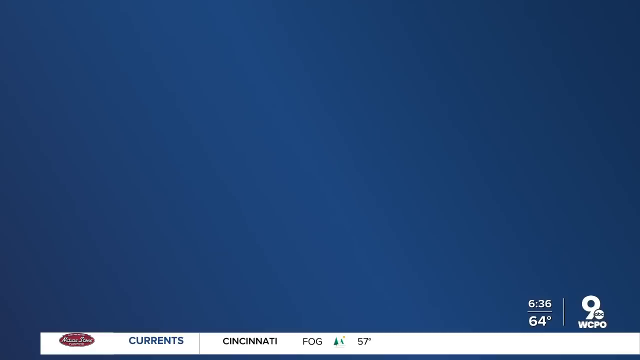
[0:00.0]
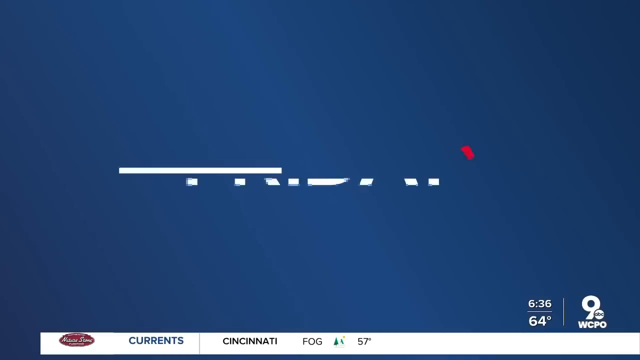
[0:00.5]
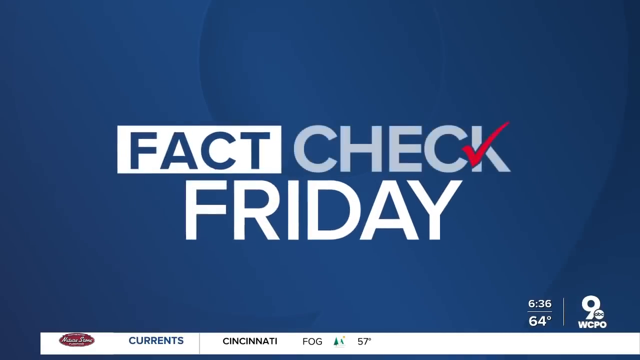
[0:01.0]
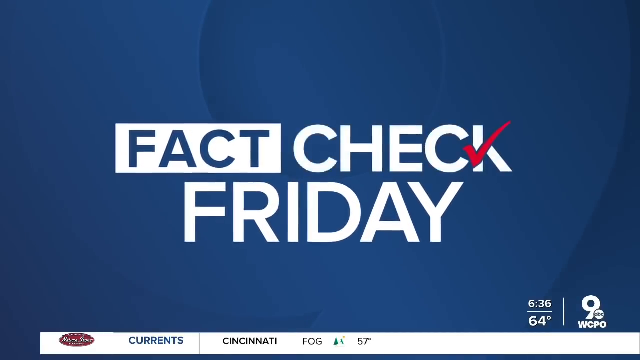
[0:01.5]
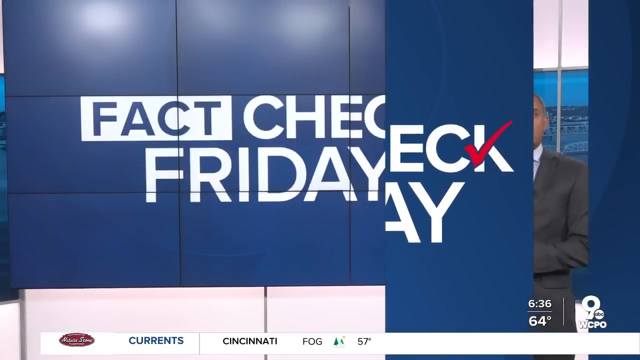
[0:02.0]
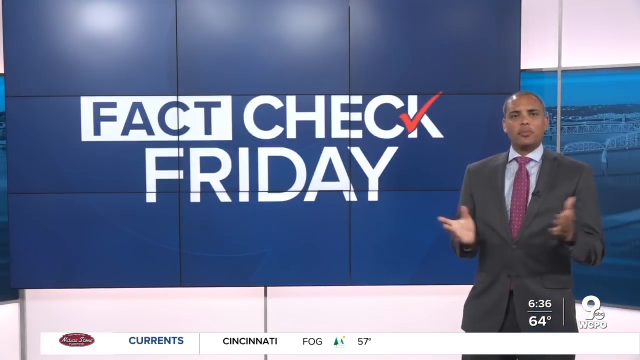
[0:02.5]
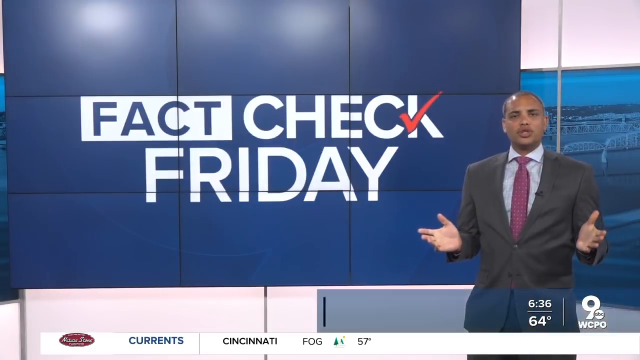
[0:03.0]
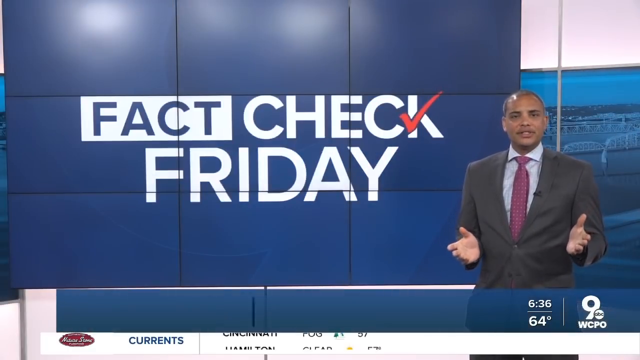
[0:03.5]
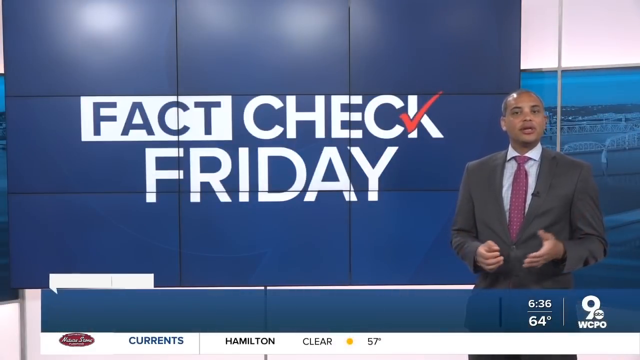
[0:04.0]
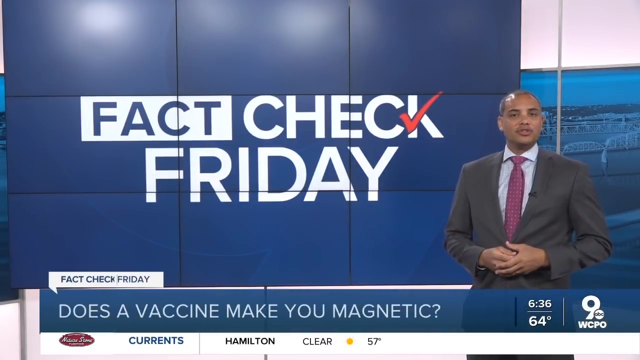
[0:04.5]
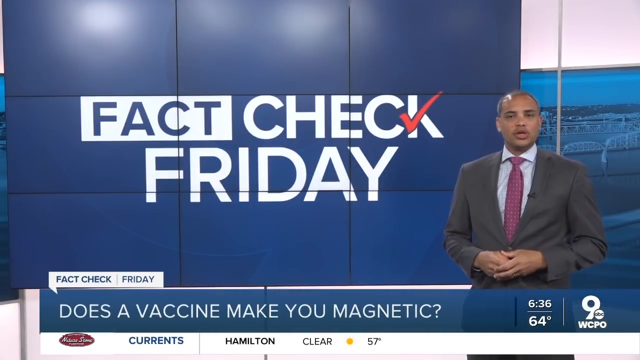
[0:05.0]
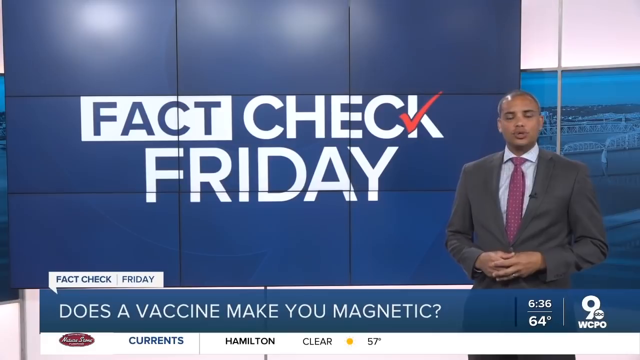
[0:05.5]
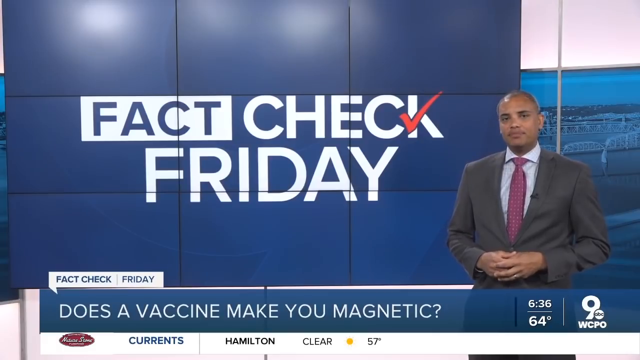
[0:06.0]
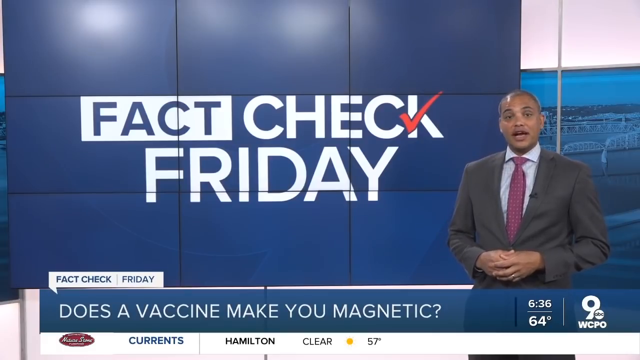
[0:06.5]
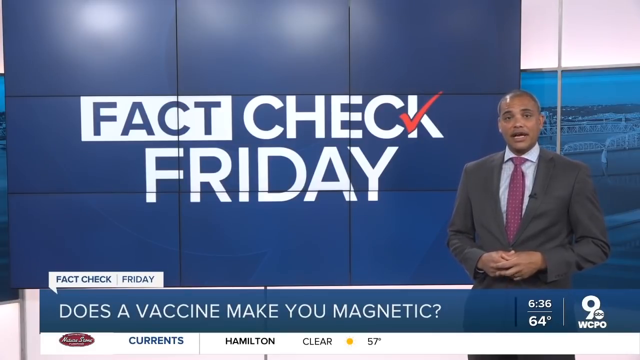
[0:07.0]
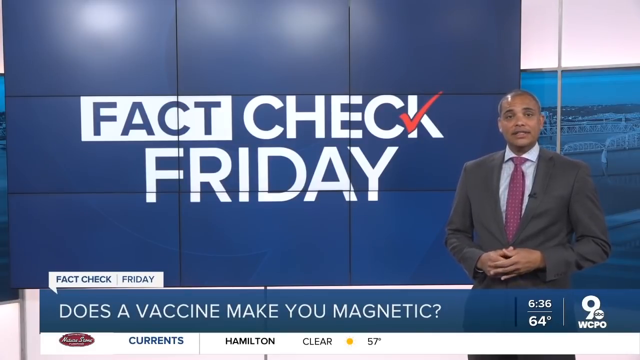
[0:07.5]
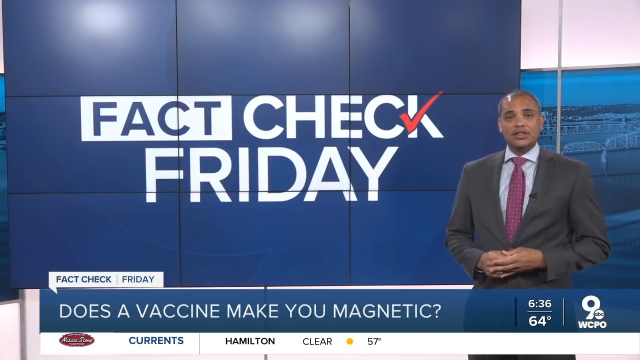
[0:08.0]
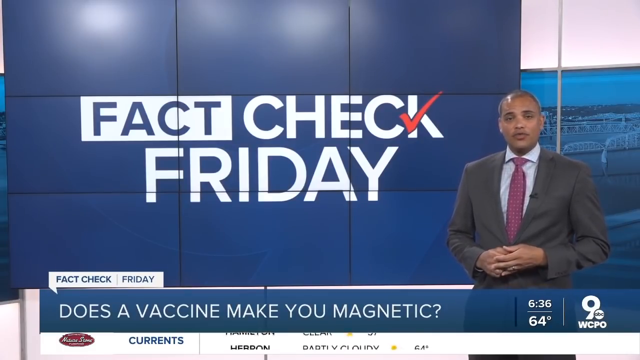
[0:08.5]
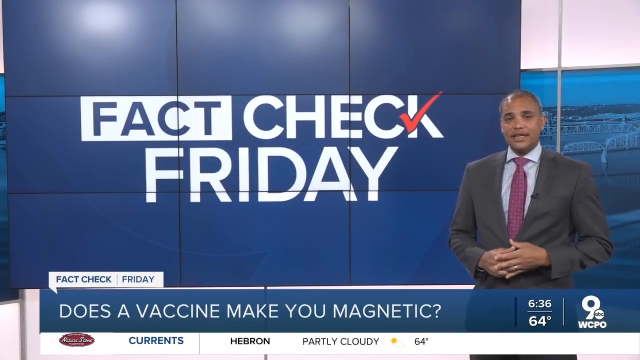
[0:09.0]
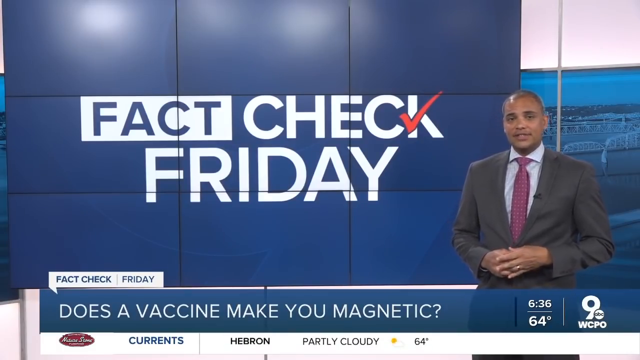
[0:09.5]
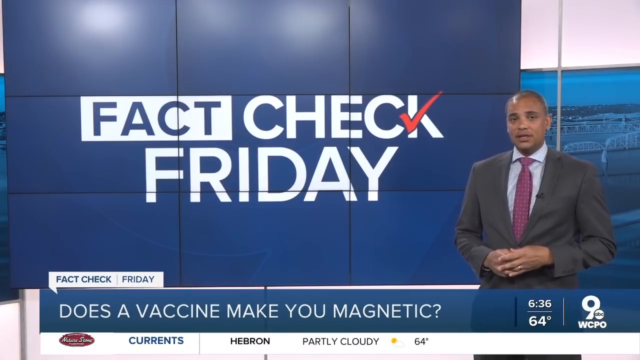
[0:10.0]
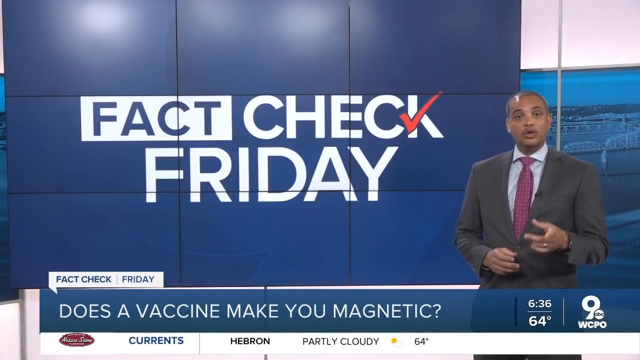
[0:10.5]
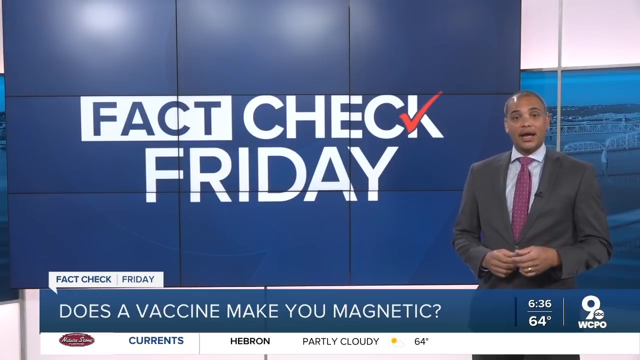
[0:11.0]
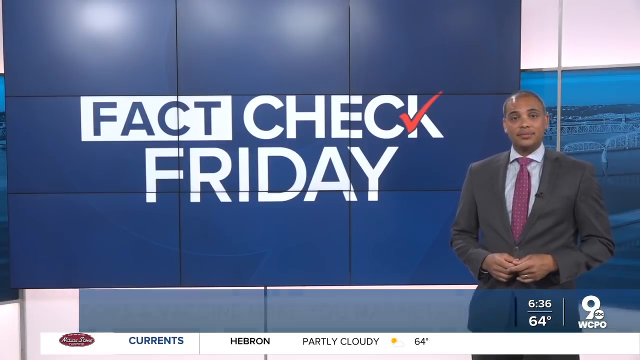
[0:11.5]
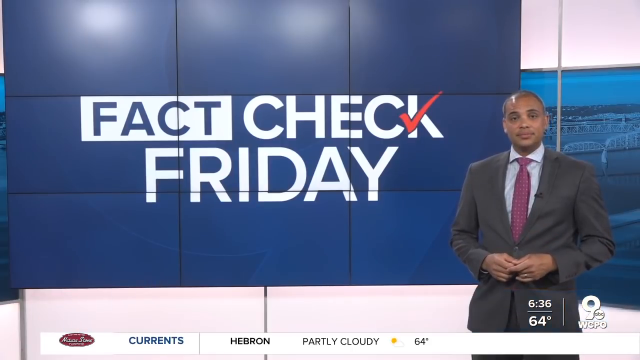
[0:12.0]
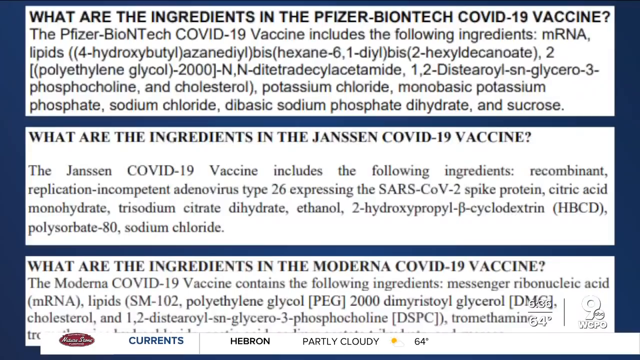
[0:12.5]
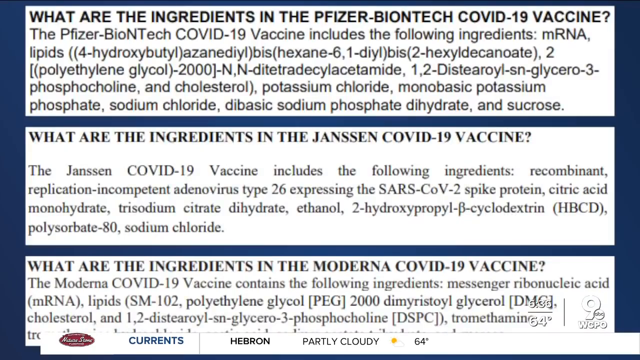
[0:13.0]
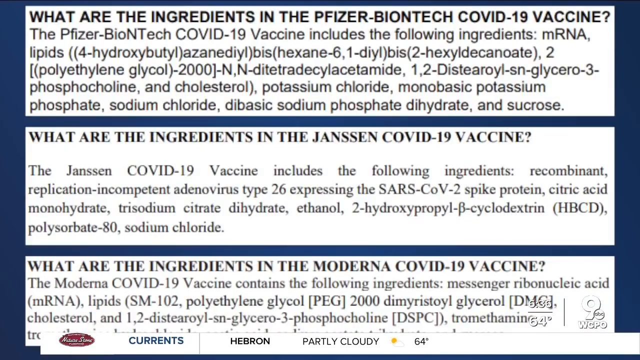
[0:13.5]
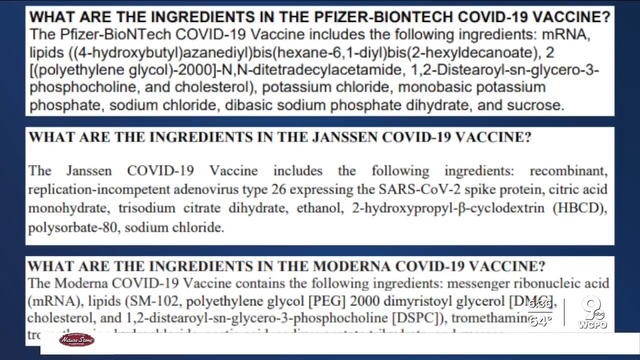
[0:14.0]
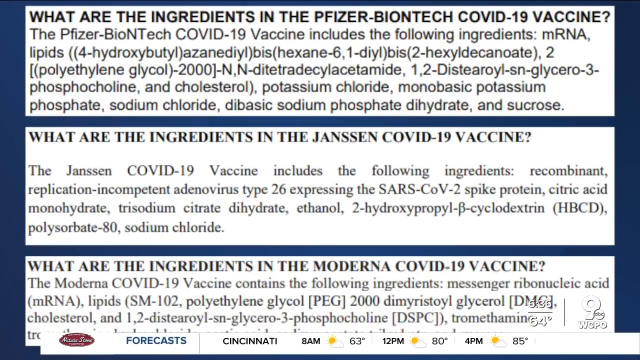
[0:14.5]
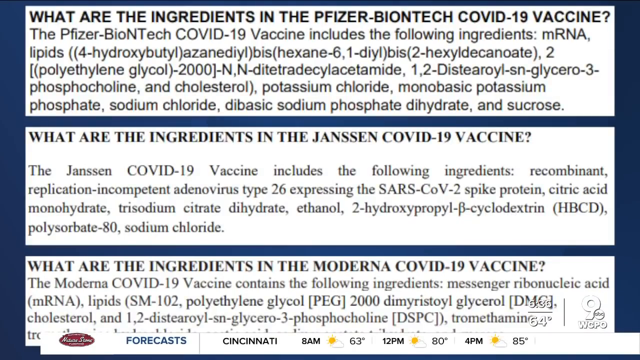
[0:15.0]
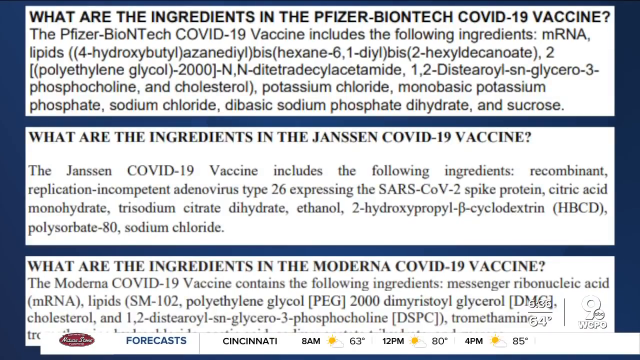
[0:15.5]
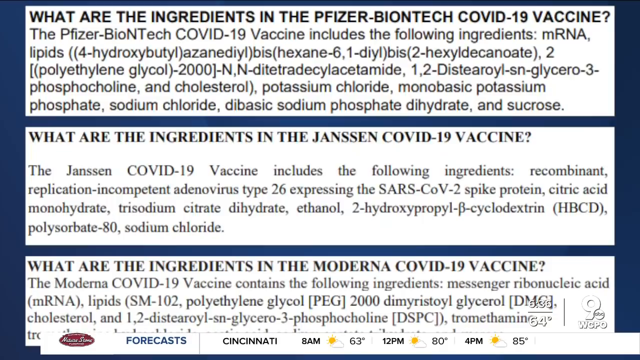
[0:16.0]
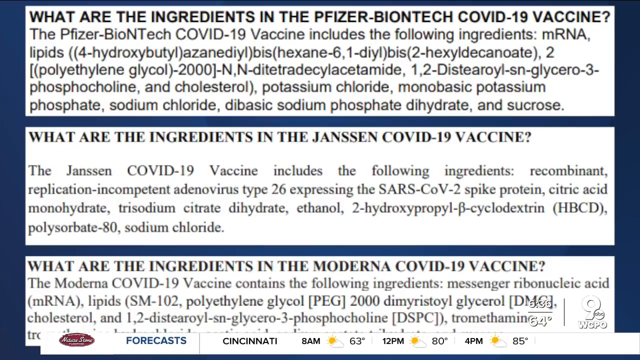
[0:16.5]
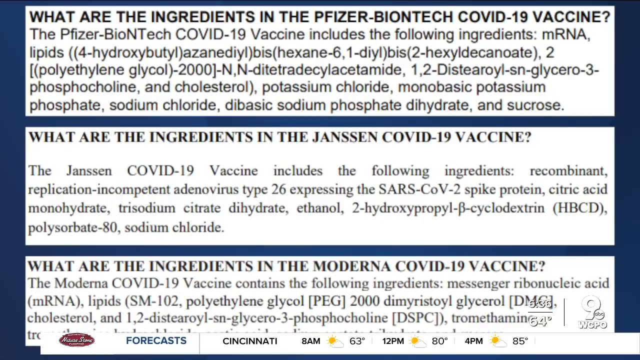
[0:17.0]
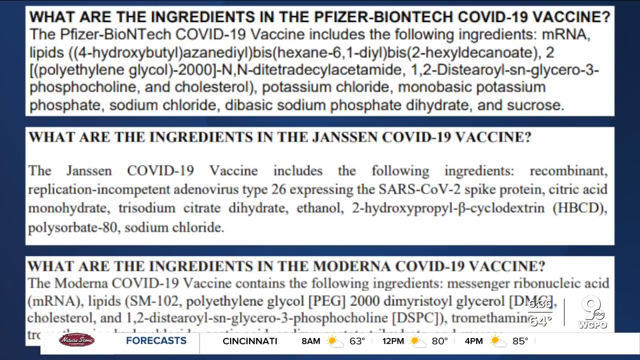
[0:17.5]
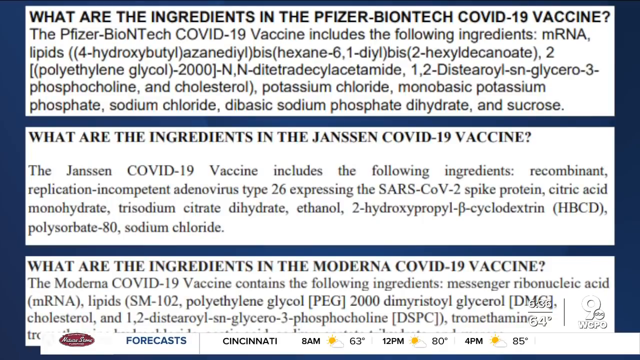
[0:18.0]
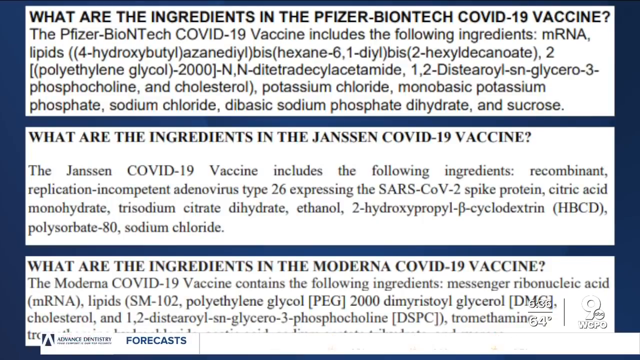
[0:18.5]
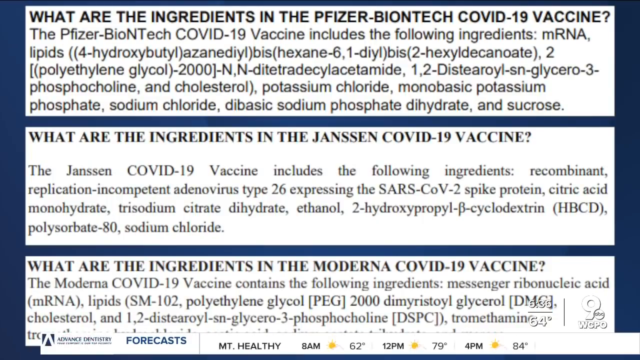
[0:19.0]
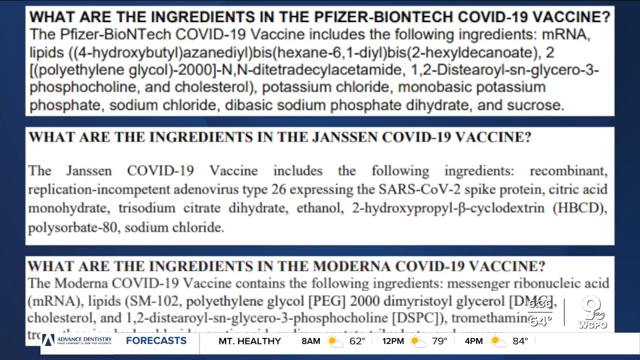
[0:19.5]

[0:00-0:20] The video opens on a news station broadcast, apparently from an ABC affiliate, News 9. The screen shows 6:36 and 64. A marquee along the bottom reads "Currents" and shows Cincinnati at 57 degrees with fog. A graphic with a bold blue background and white lettering reads "Fact Check Friday," with a red check mark coming through the letter K. A news anchor on the right side of the screen, in a dark suit, a lighter-colored undershirt and a long purple tie, stands in front of a monitor and gestures with his hands as he speaks. The screen reads "does a vaccine make you a magnet?" The video then moves to a page listing the ingredients in the Pfizer-BioNTech COVID-19 vaccine.